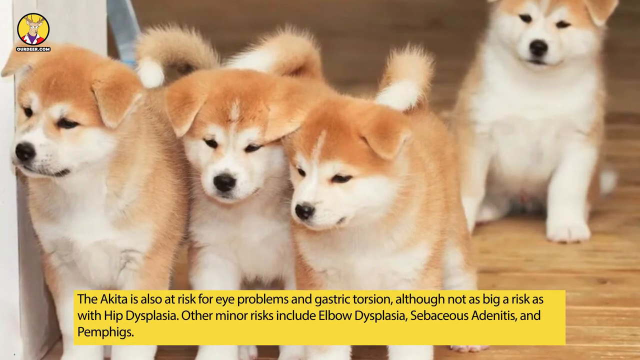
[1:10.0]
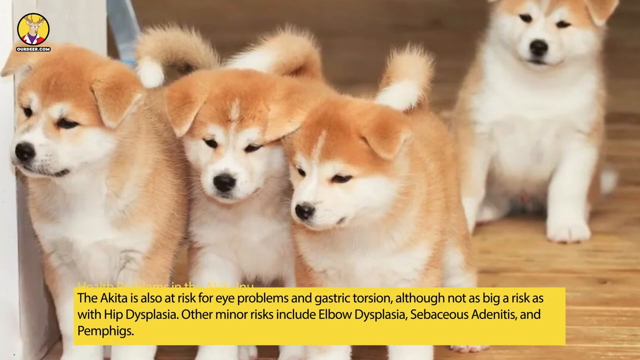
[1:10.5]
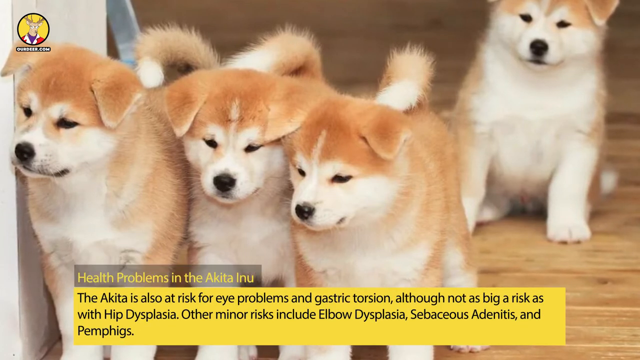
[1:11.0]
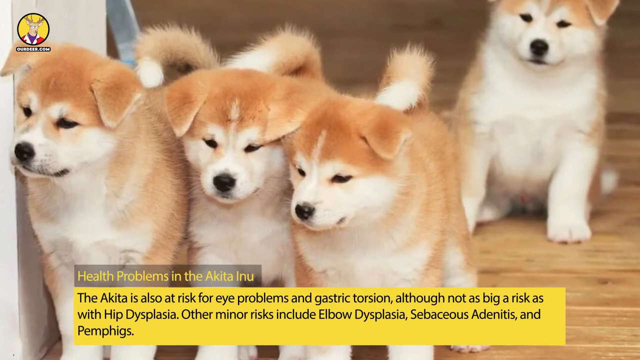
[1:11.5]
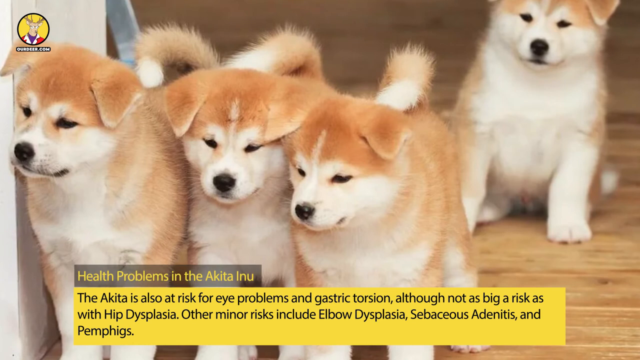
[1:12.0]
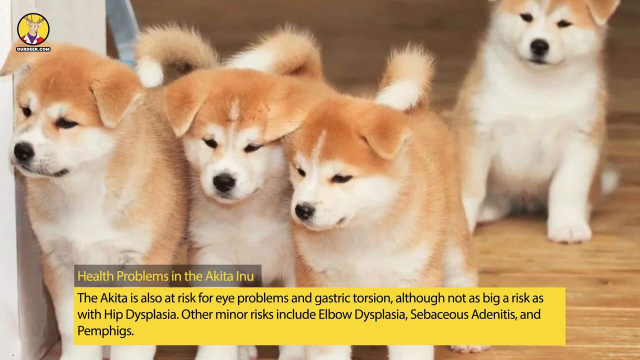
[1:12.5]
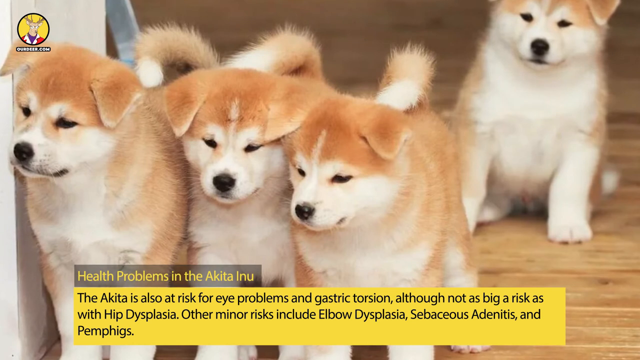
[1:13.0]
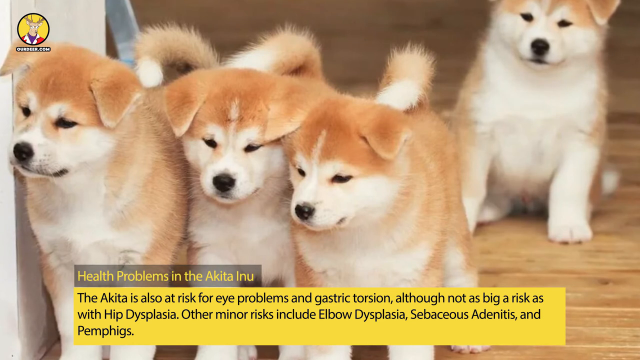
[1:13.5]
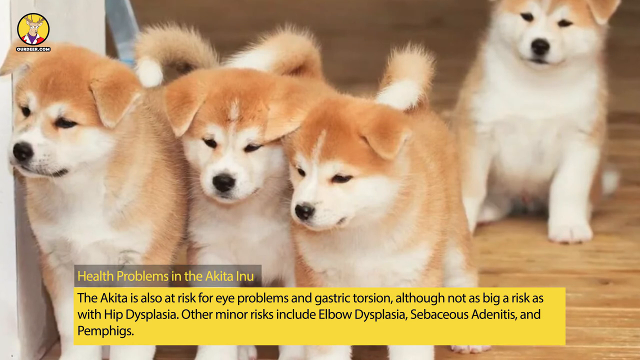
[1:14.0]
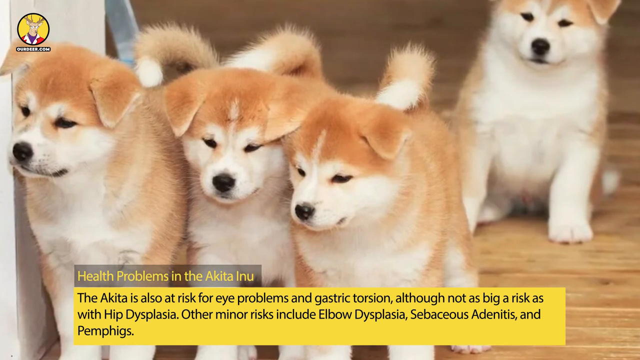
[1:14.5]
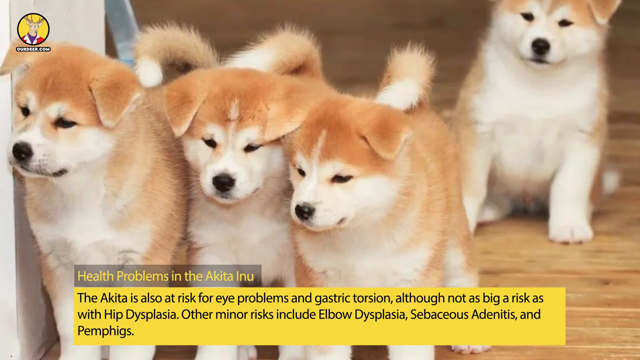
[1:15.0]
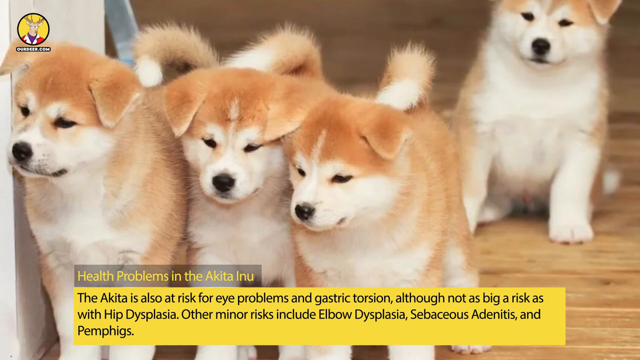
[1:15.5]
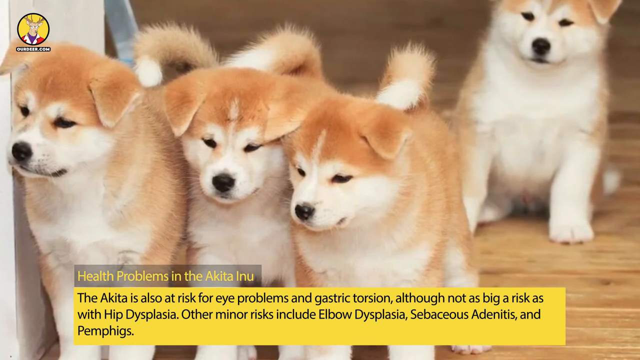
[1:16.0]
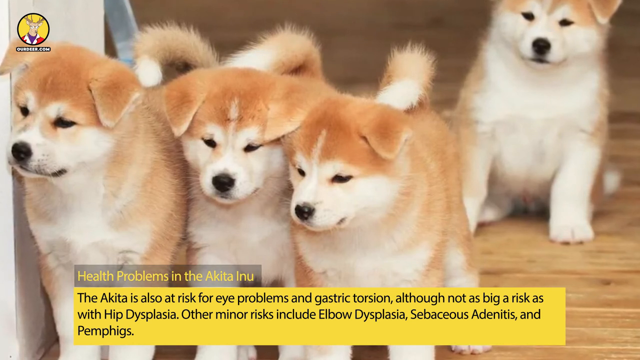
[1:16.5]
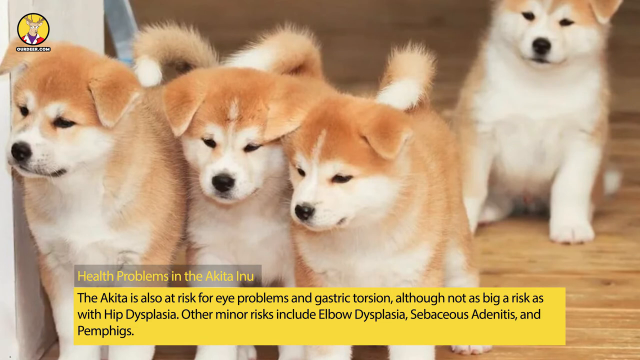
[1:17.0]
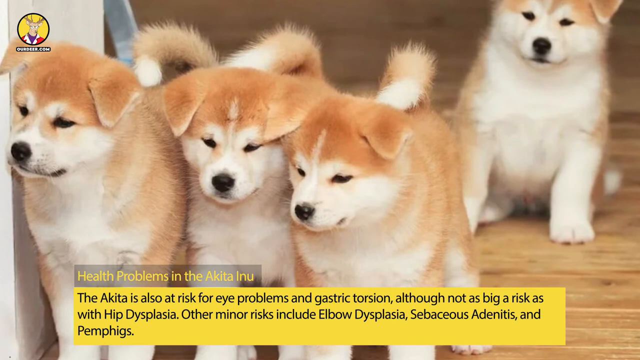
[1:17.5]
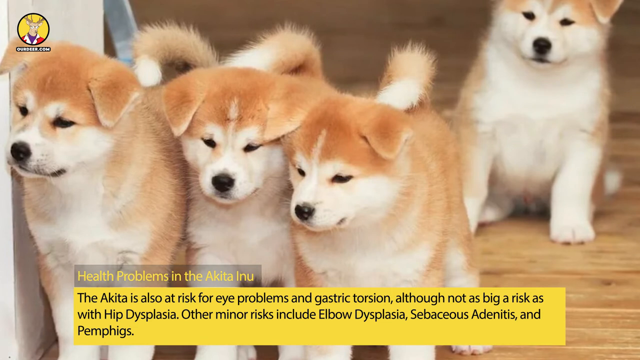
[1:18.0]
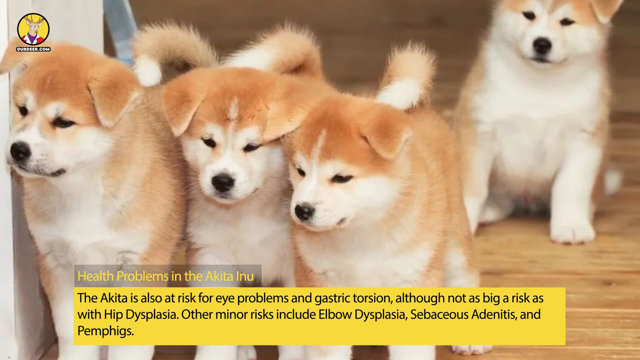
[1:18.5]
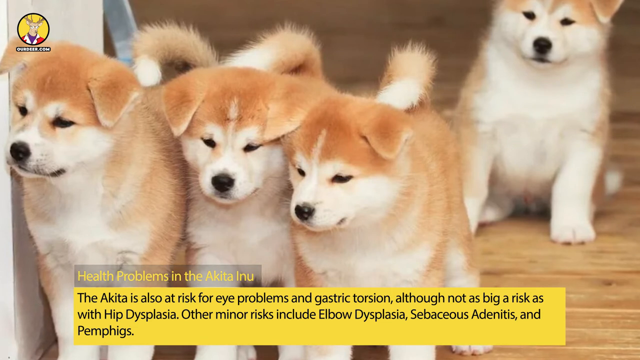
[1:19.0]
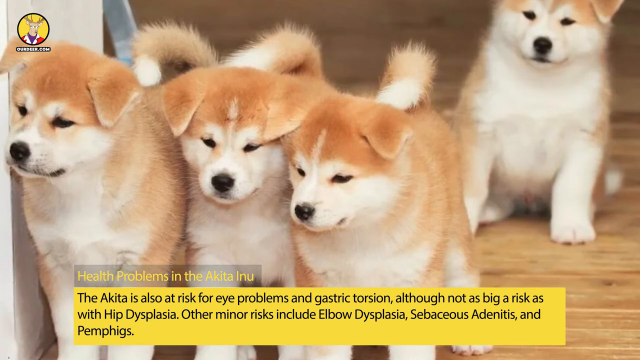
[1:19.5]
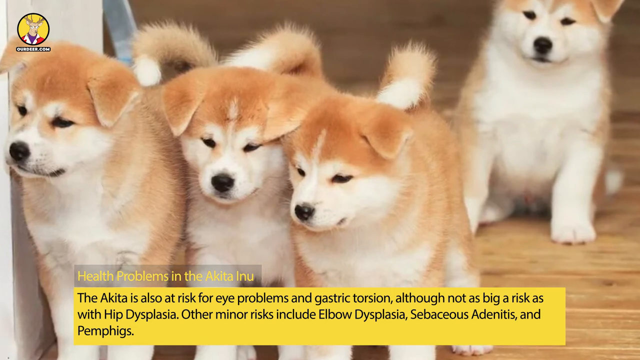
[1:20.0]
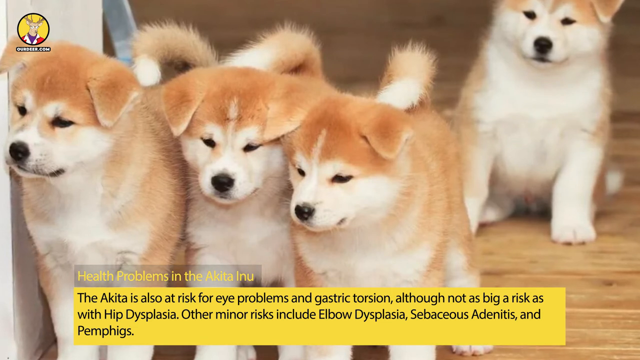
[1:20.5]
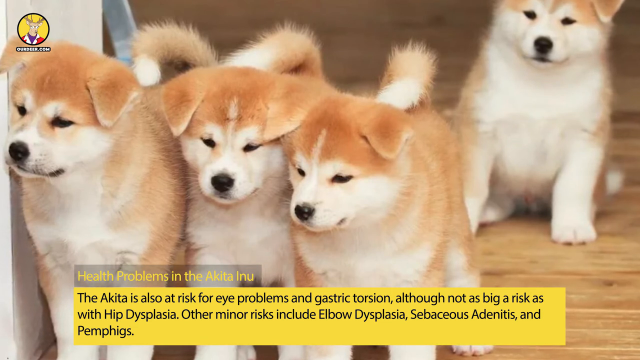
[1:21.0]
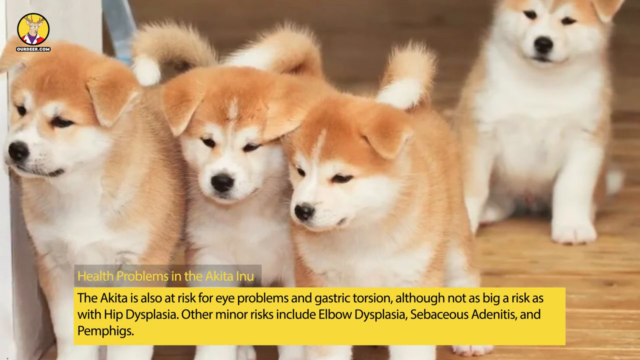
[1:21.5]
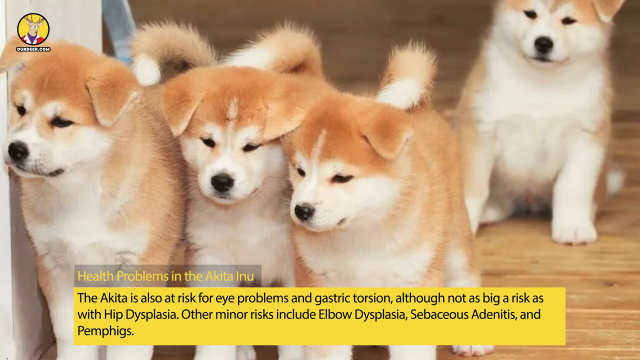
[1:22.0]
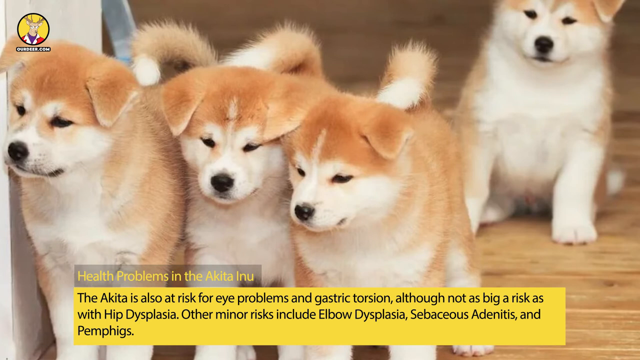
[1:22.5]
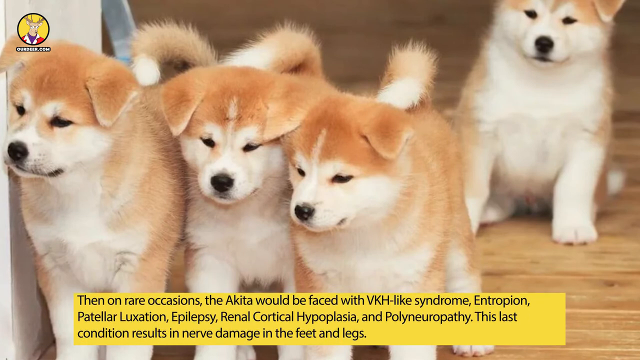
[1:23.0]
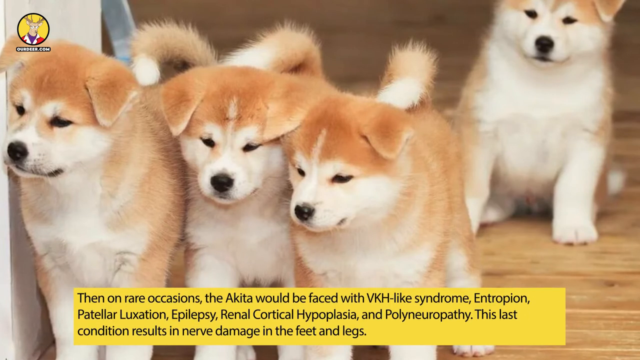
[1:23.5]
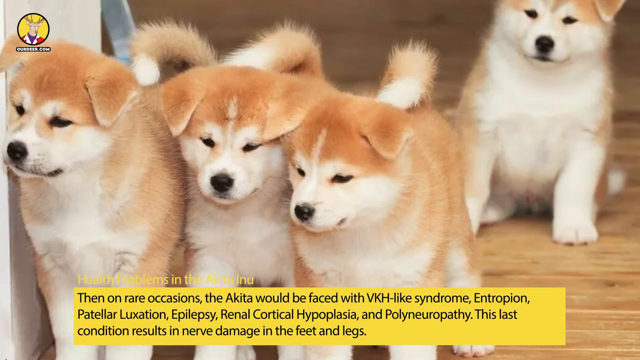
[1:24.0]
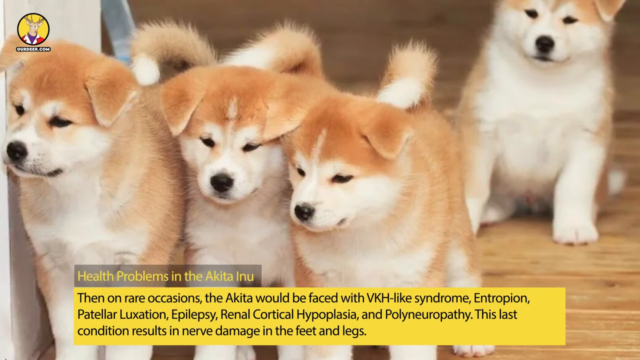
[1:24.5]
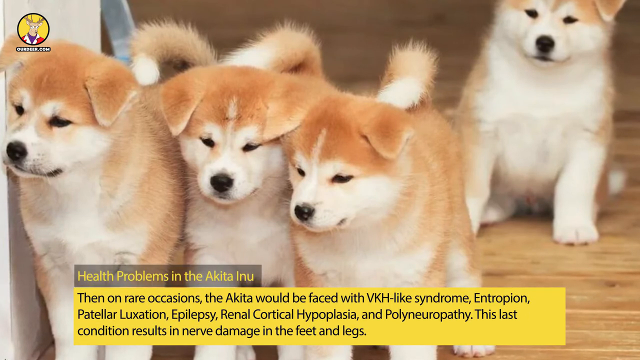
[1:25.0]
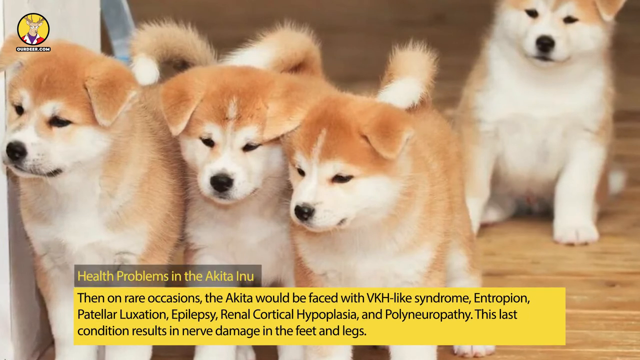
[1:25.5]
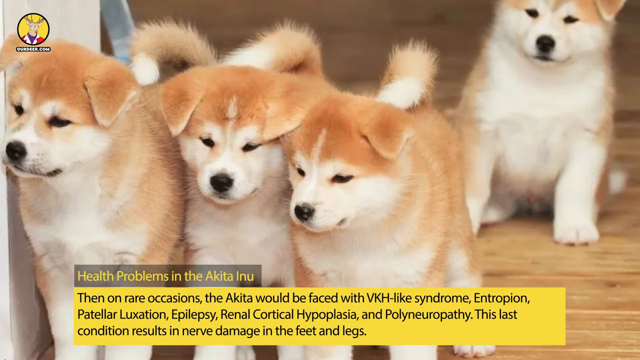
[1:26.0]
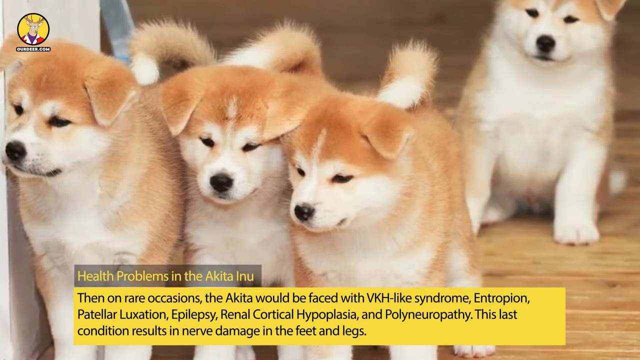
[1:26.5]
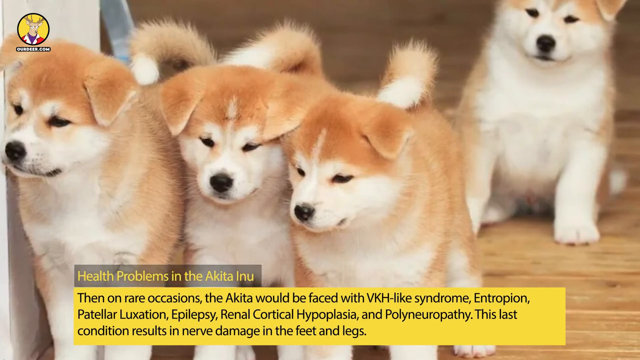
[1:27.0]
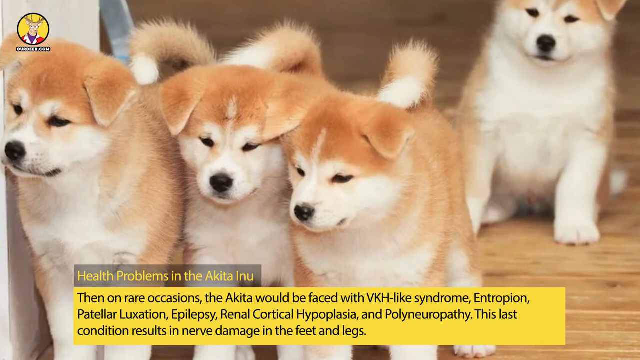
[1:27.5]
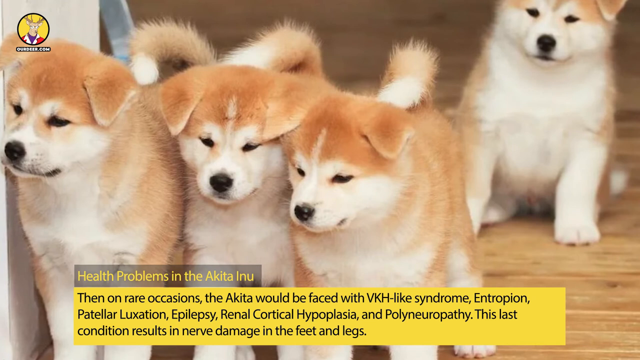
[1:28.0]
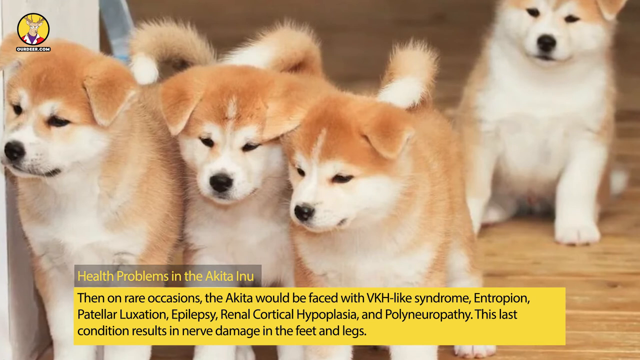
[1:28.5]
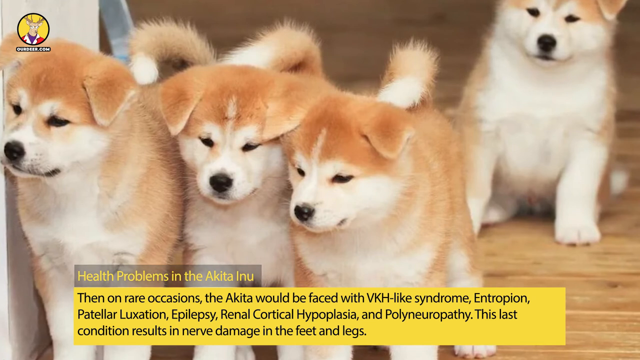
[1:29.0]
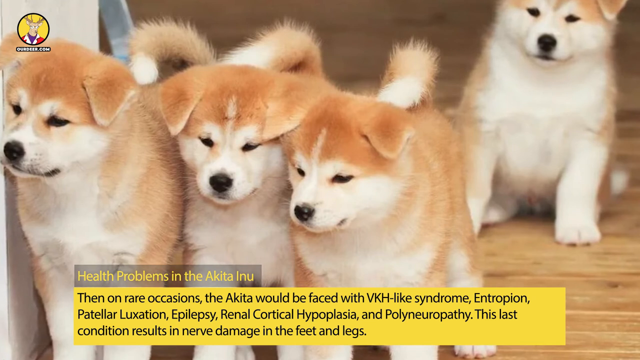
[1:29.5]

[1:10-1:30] Text reads "The Akita is also at risk for eye problems and gastro torsion, although not as big a risk as hip dysplasia. Other minor risks include elbow dysplasia", along with "health problems in the Akita Inu". The picture shows little puppies that look like they are in a house on a wood floor; they are brown and white with little black noses. The text then reads "on rare occasions, the Akita could be faced with" a list of conditions including entropion, patellar luxation, epilepsy, renal cortical hypoplasia and polyneuropathy, followed by "This last condition results in nerve damage in the feet and the legs."